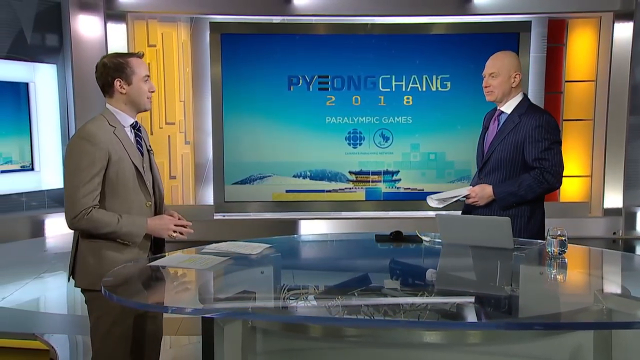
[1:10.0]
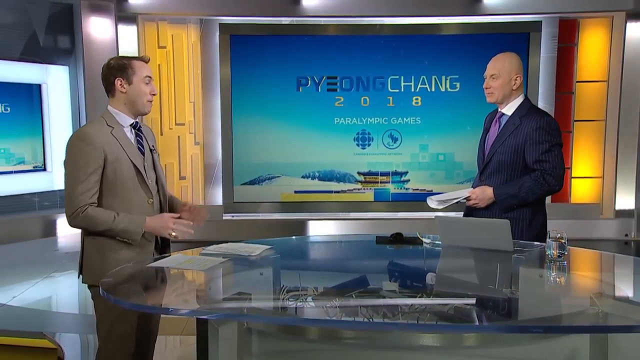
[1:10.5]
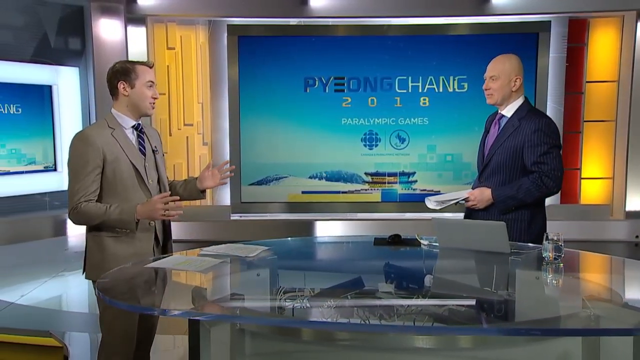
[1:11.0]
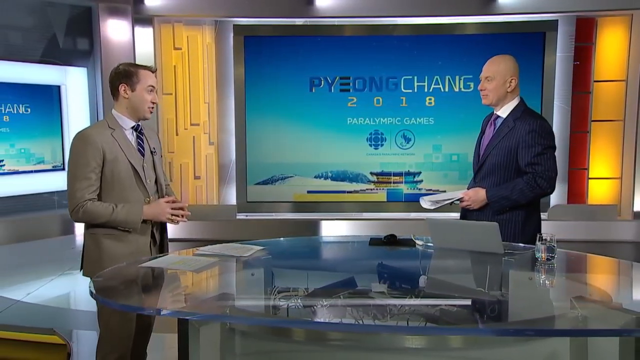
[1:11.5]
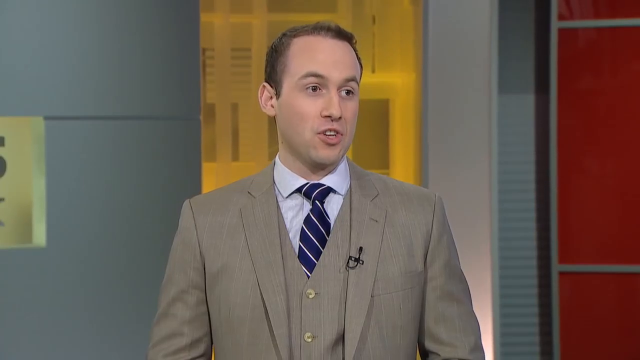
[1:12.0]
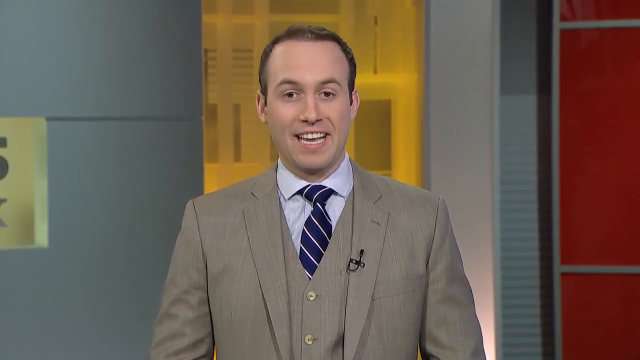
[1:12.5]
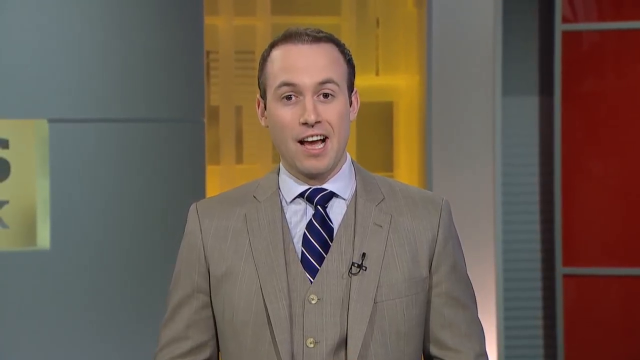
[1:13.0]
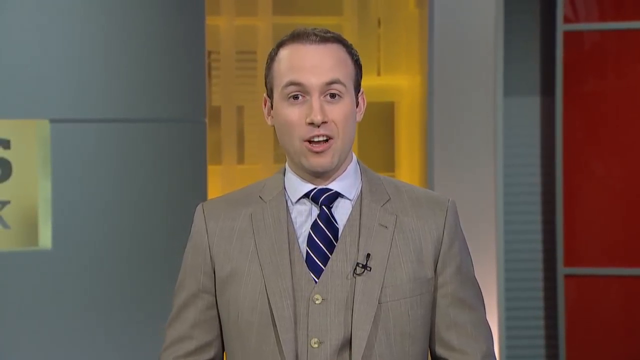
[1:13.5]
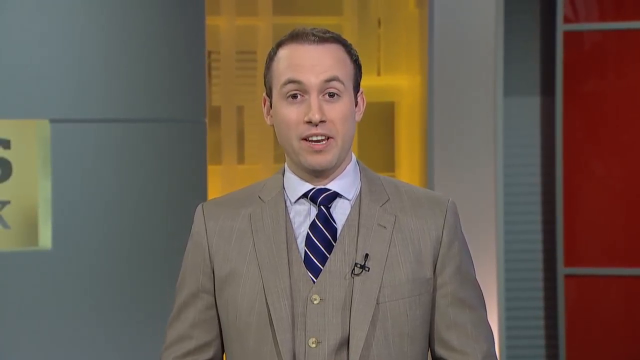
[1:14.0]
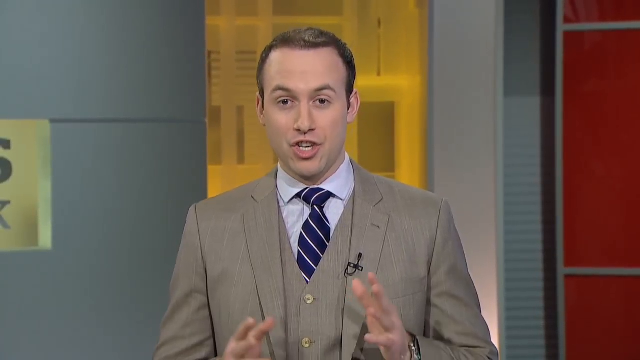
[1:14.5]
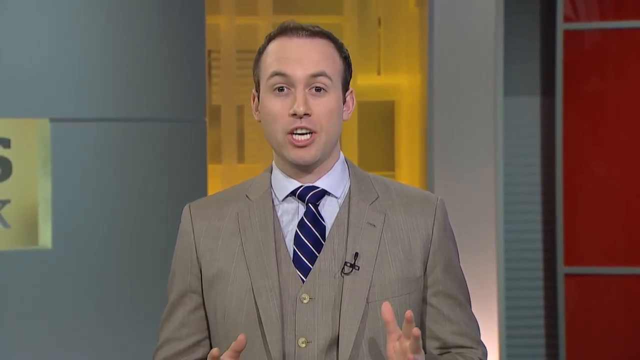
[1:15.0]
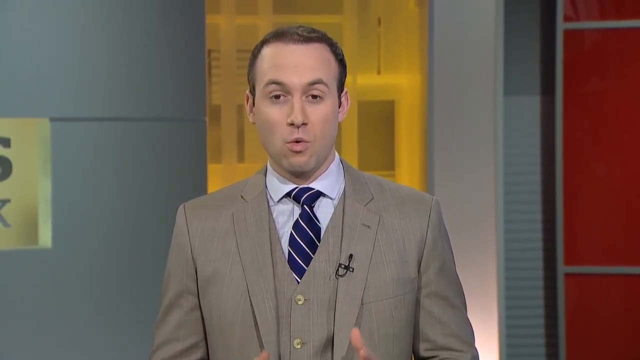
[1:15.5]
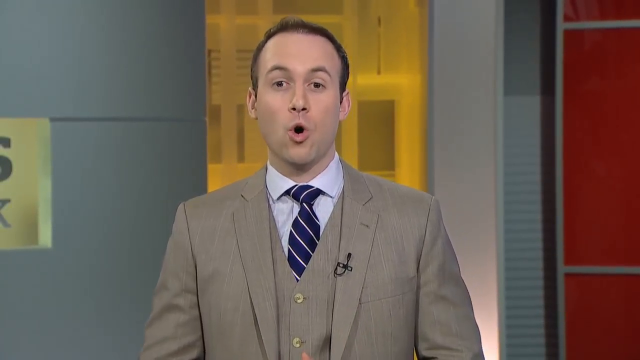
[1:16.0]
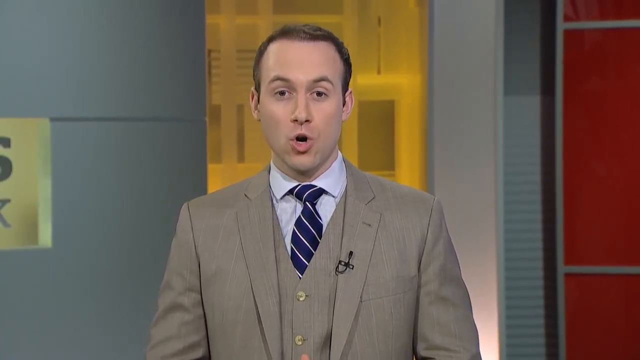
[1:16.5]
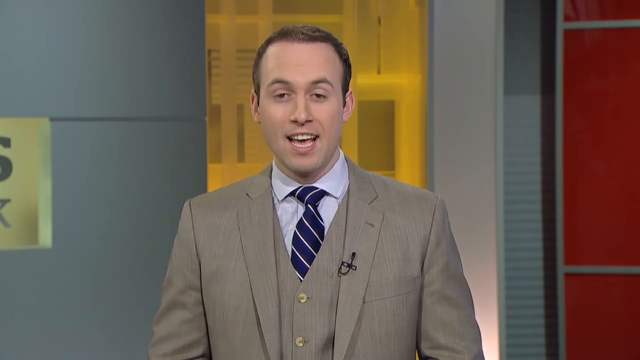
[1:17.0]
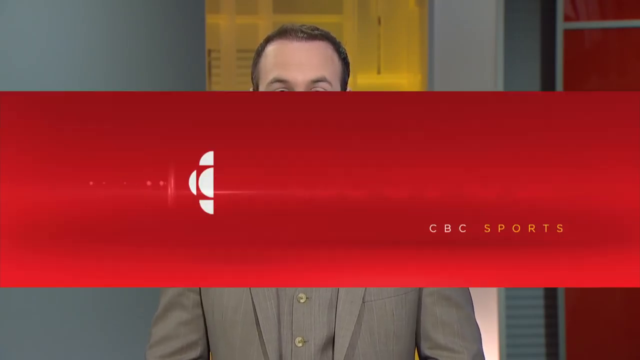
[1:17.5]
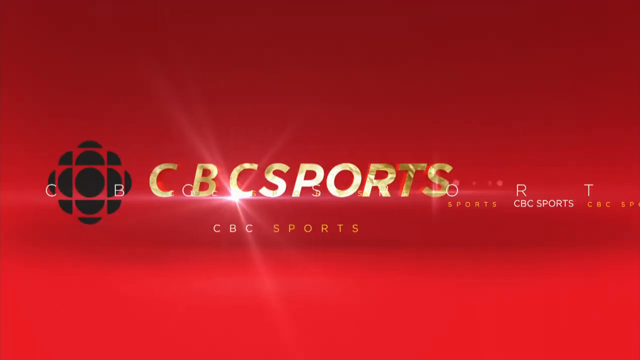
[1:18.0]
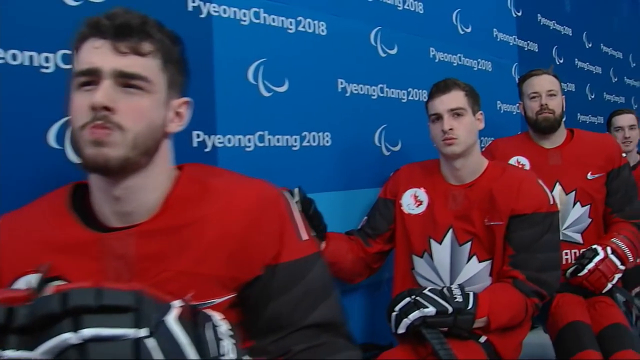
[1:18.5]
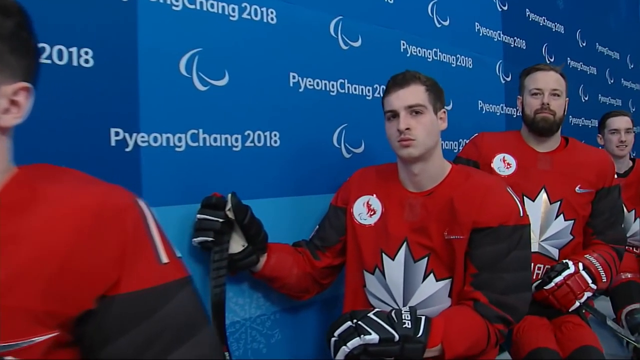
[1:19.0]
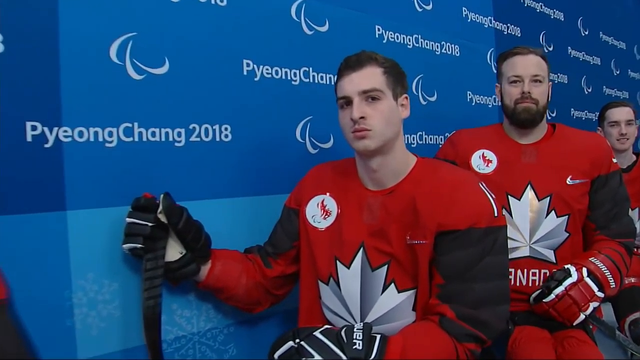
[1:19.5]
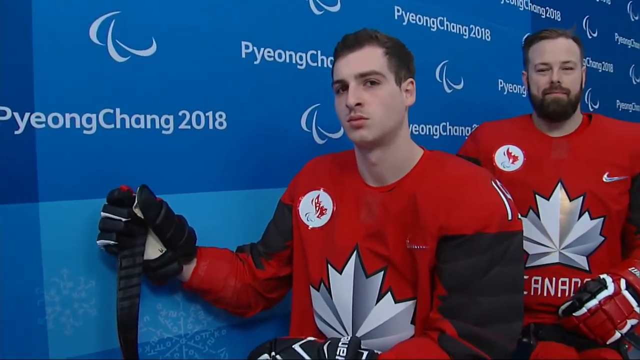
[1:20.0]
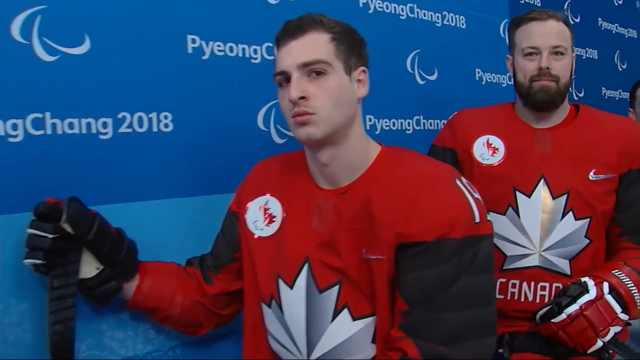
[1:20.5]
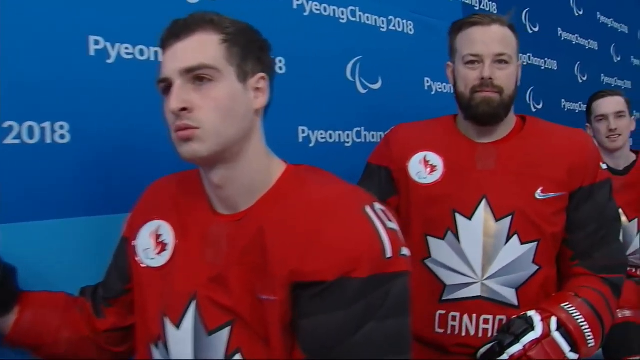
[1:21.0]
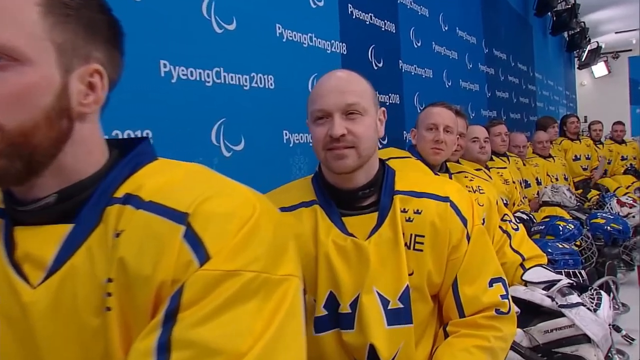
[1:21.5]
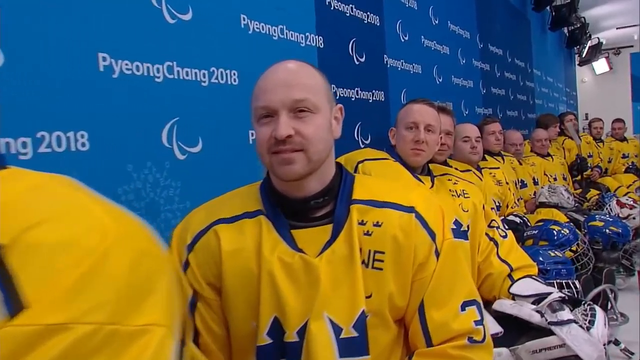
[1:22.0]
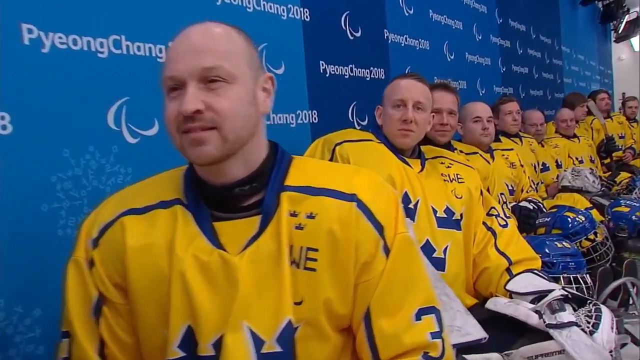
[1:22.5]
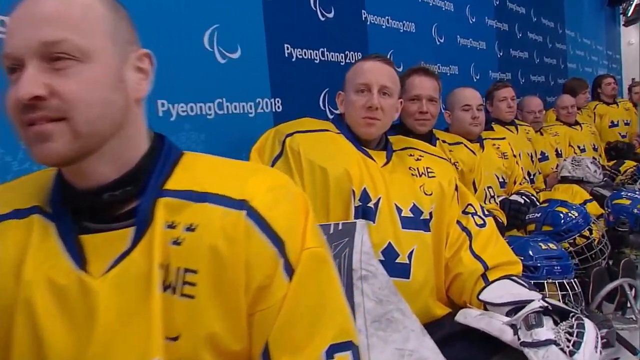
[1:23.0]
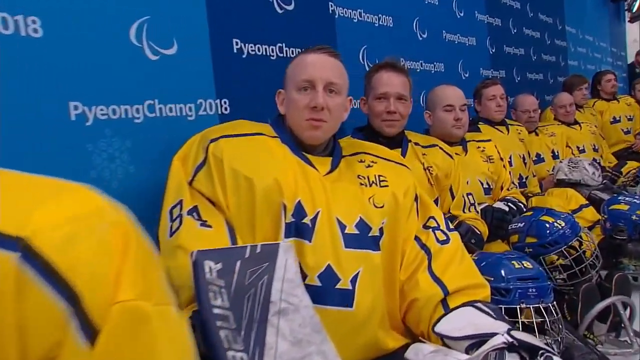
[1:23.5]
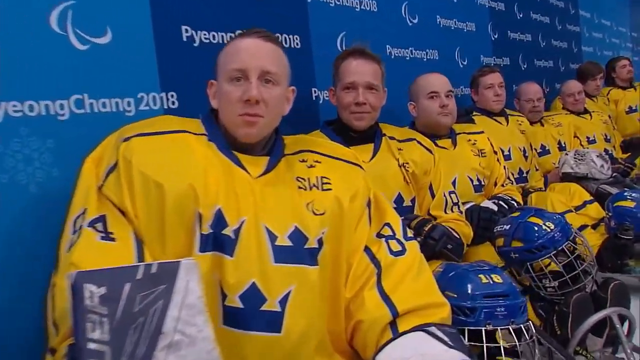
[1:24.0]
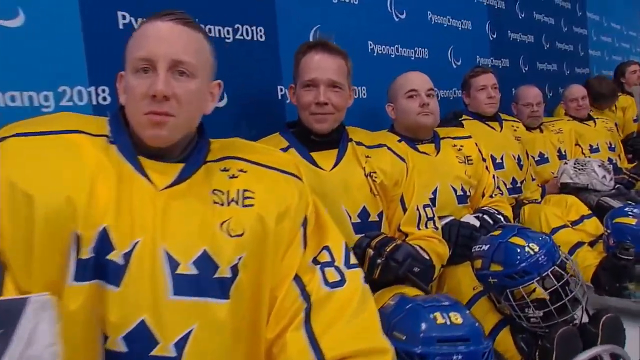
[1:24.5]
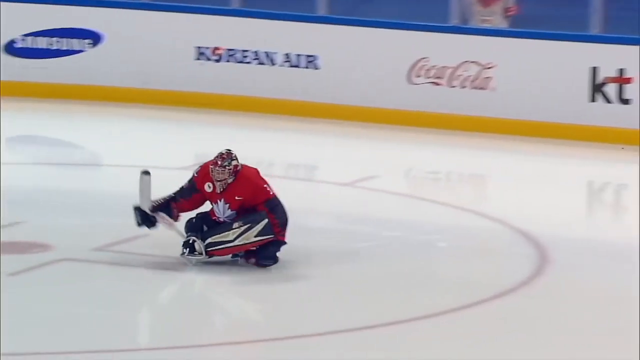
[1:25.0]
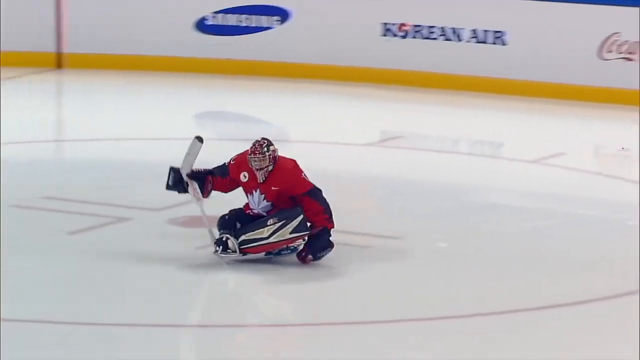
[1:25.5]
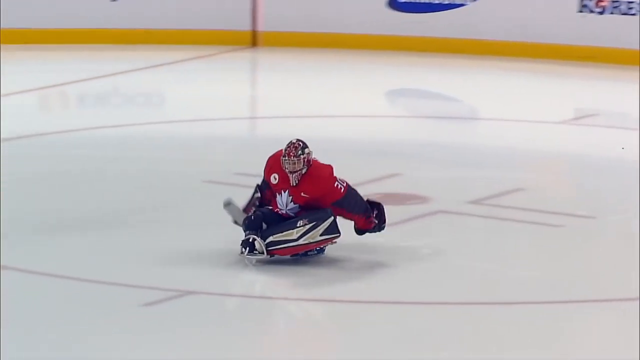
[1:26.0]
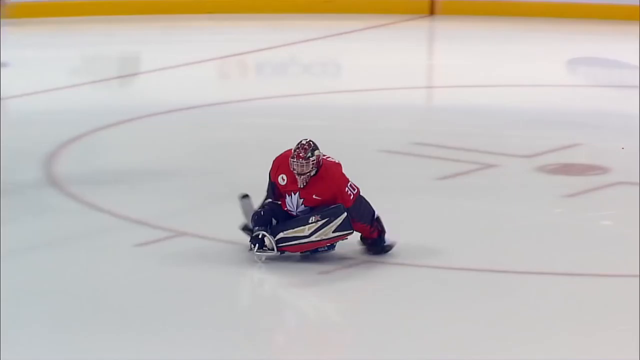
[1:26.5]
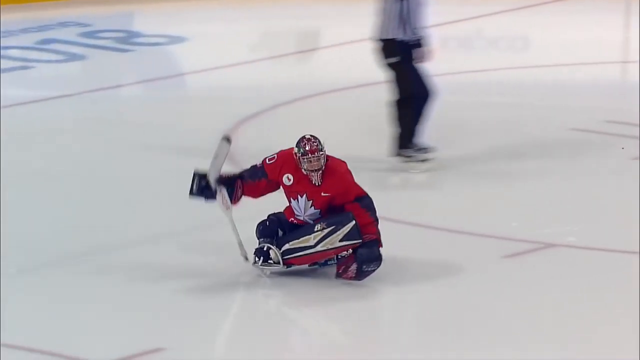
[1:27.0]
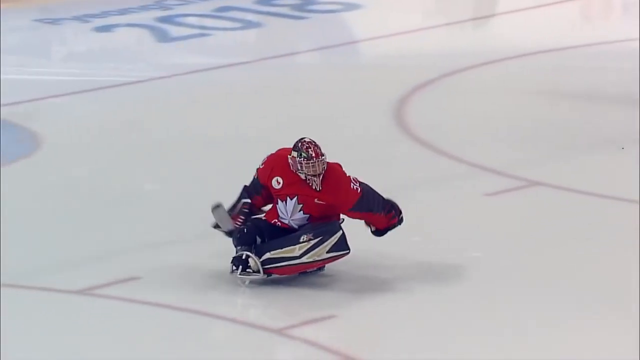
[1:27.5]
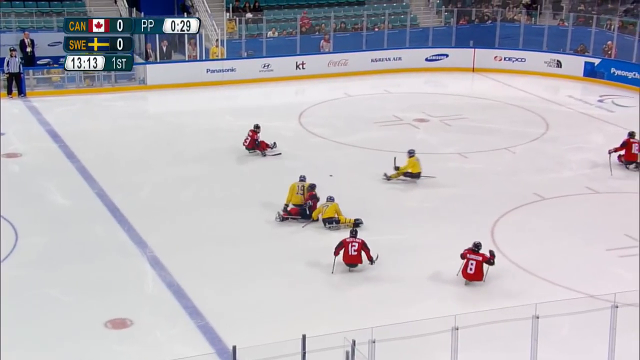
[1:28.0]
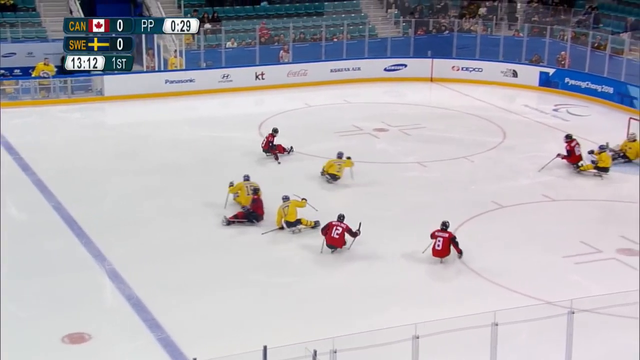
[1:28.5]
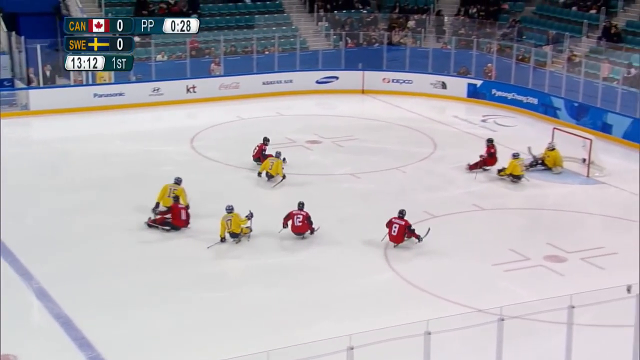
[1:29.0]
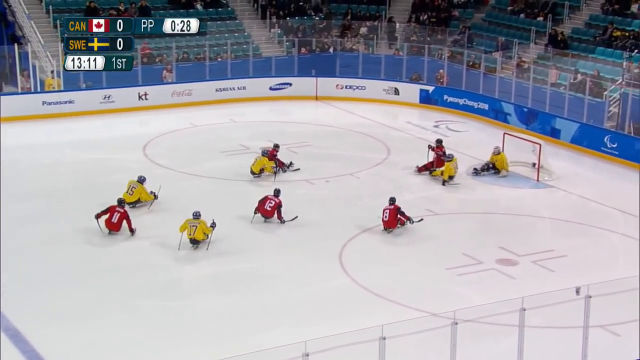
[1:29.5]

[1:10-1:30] In the newsroom, the reporter with hair is on the left and the bald reporter is on the right, in front of a blue Pyeongchang 2018 Paralympic Games background, with a table in front of them. The bald man appears to have a laptop, and the man on the left has some papers. They talk, and the brown-haired man shifts from looking at his colleague to looking at the camera, speaking with ordinary hand gestures. A red screen reading "CBC Sports" appears, followed by footage of what looks like the Canadian hockey team lined up along a blue wall that says "Pyeongchang 2018" many times, in a kind of panoramic shot. Then comes a shot of what looks like the Swedish team, apparently their opponents. The goalies go onto the ice. The players are all on some kind of gliding apparatus, and the teams are all on the same level.